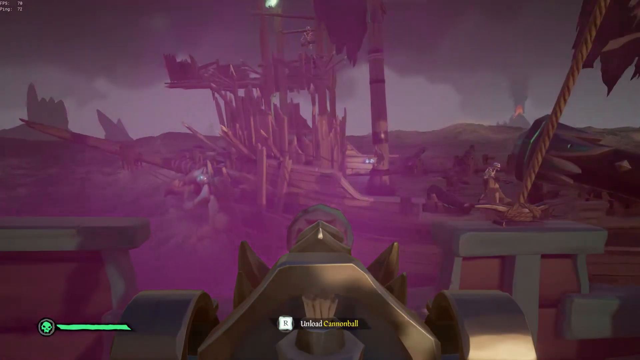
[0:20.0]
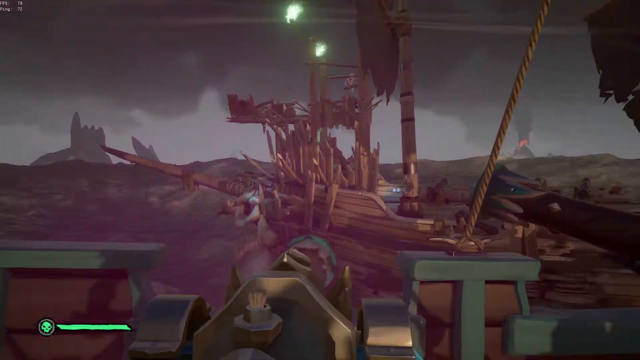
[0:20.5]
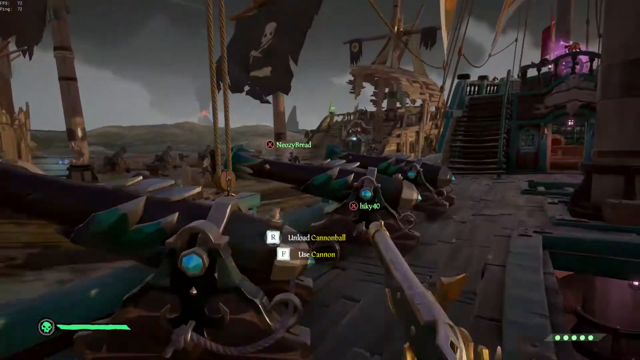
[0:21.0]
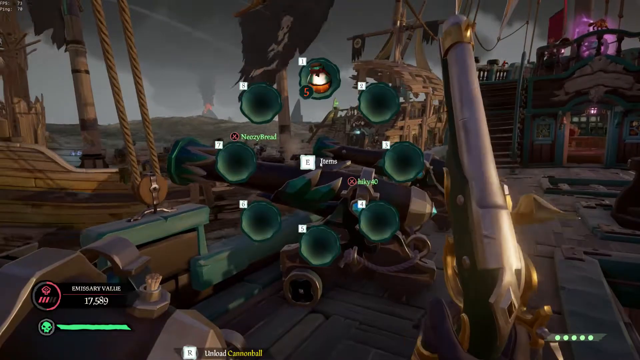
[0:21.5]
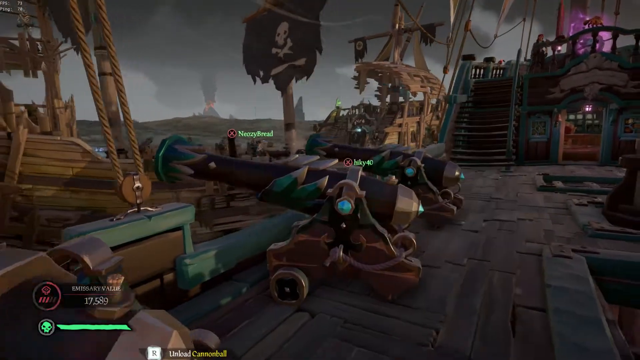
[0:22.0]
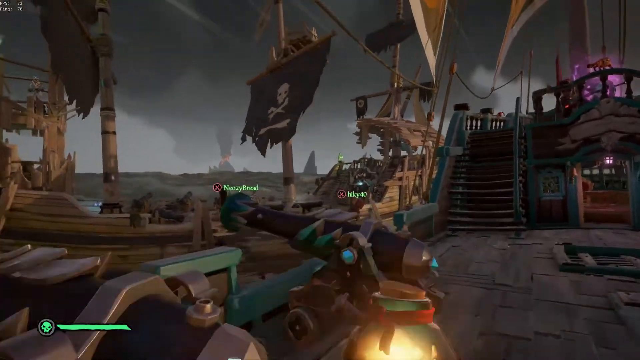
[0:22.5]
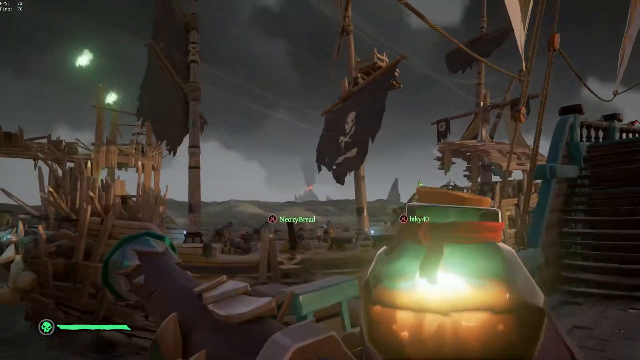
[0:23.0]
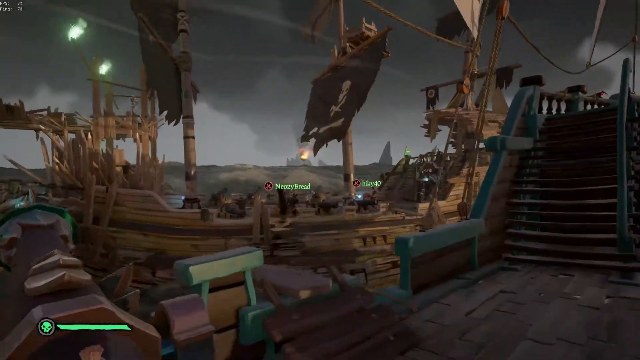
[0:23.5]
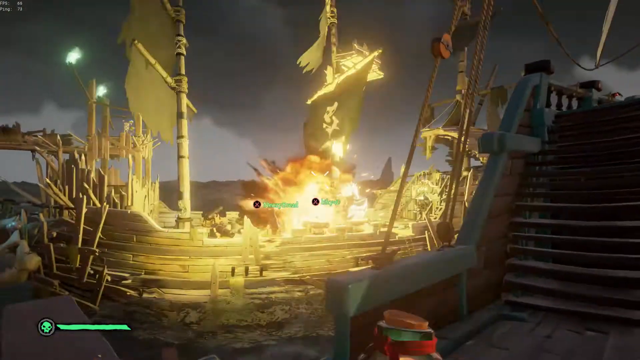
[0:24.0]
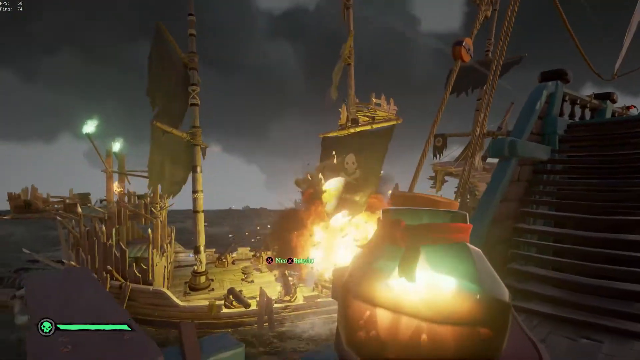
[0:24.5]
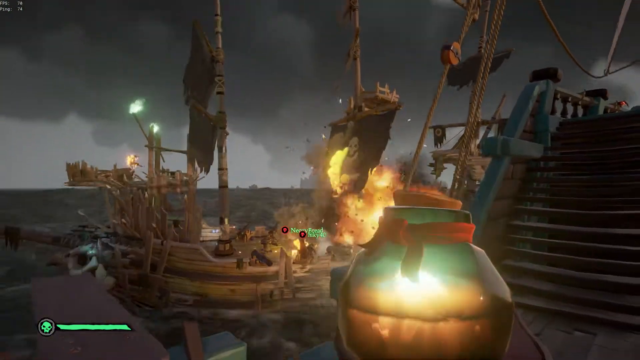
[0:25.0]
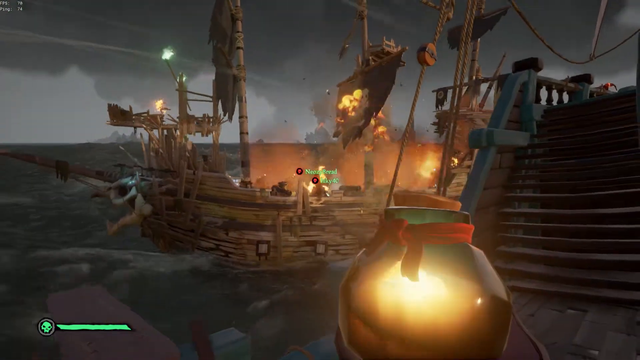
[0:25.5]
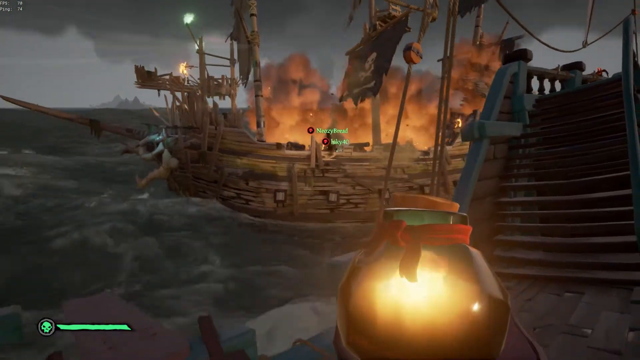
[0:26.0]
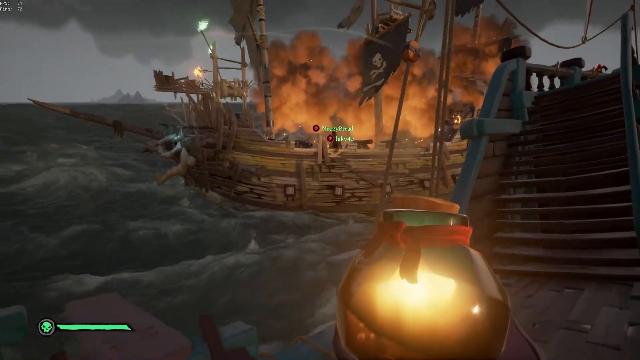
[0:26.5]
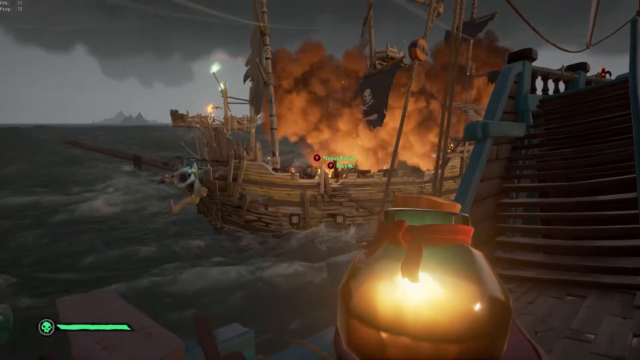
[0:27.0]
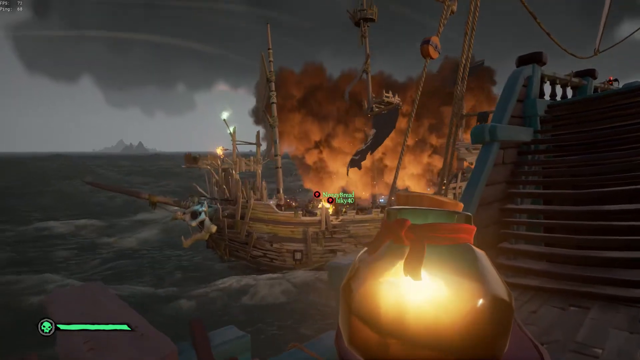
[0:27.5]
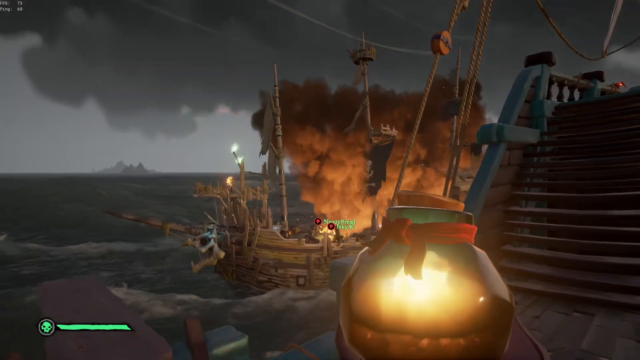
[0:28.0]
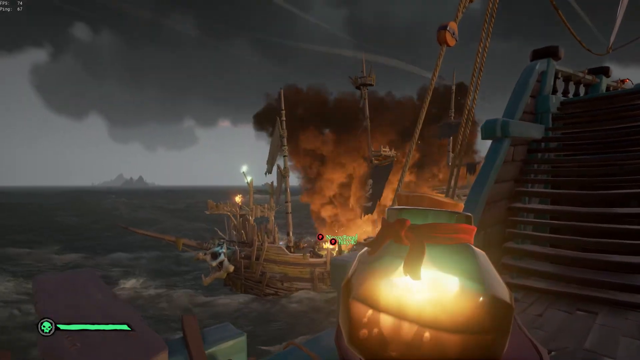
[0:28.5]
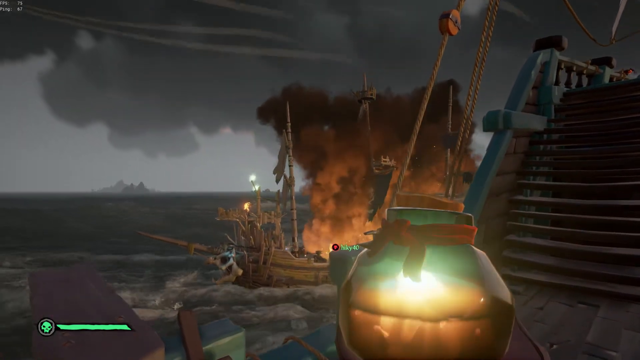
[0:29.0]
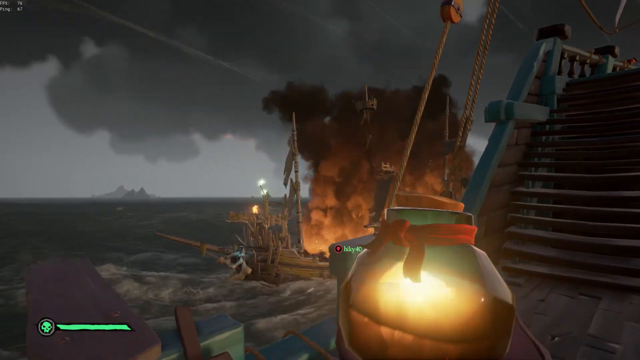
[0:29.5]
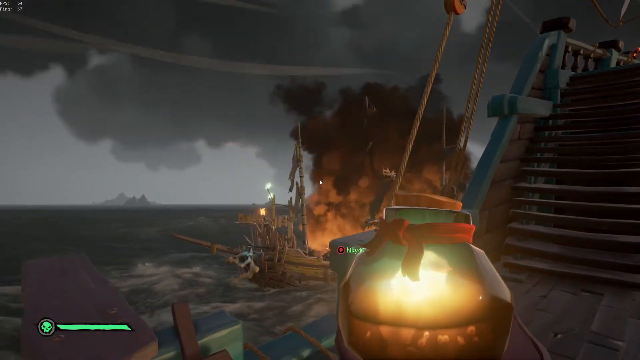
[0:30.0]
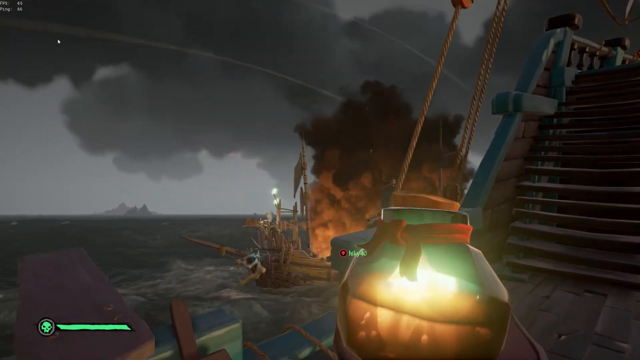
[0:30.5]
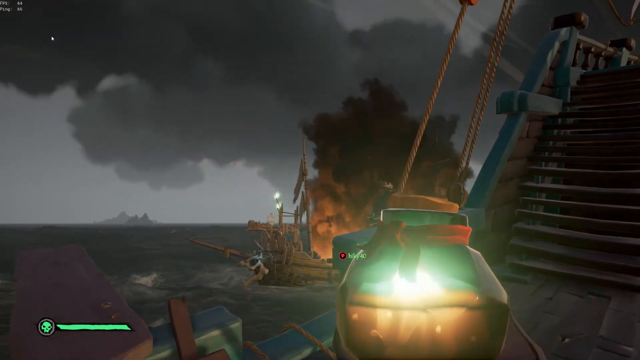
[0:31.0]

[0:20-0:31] After the ramming, pirate flags are visible on the second ship. The first-person player on the first ship holds some kind of flaming orb, apparently an improvised Molotov cocktail concoction, and throws it onto the pirate ship they are attacking. Teammates, presumably, board the pirate ship. The pirate ship has been hit by the Molotov cocktail and is on fire, with heavy black smoke rising above it and the pirate ship flags melting. In the final second, the attacking ship drifts away from the burning pirate ship.